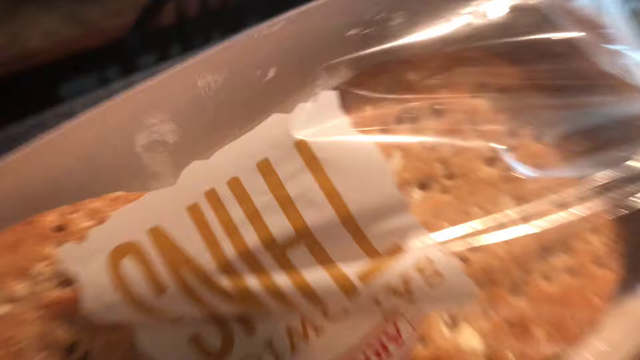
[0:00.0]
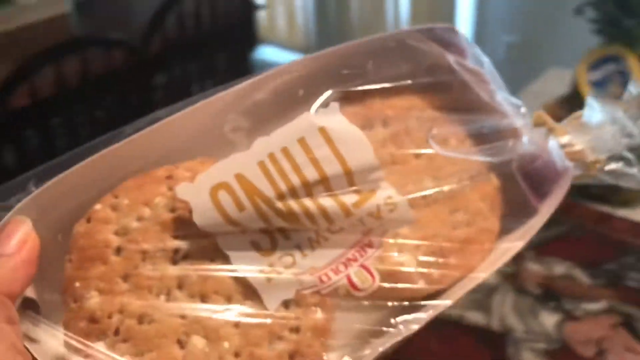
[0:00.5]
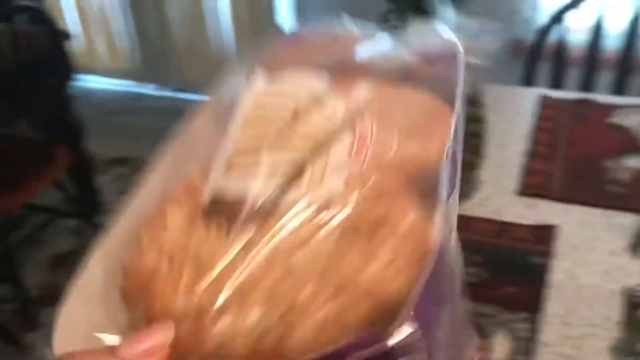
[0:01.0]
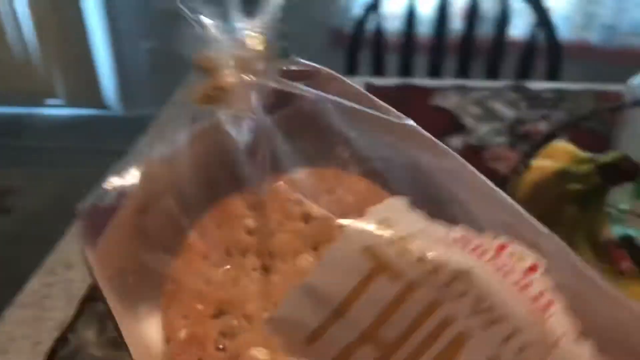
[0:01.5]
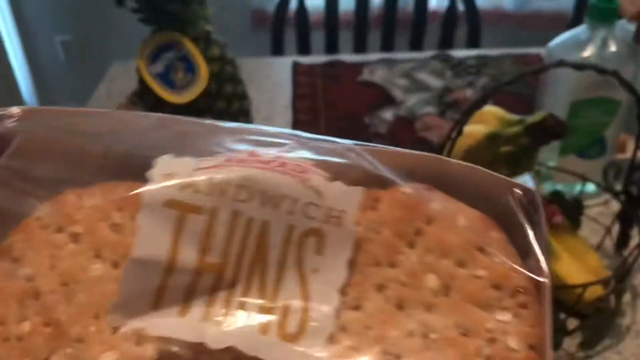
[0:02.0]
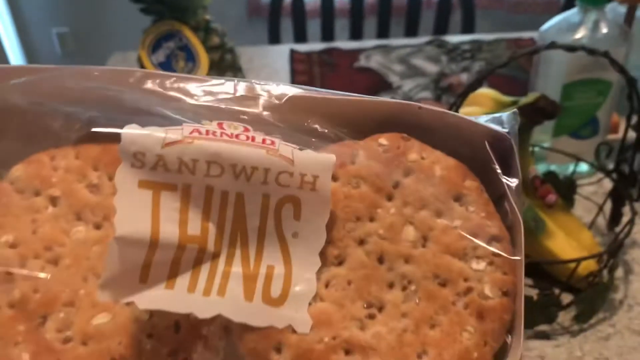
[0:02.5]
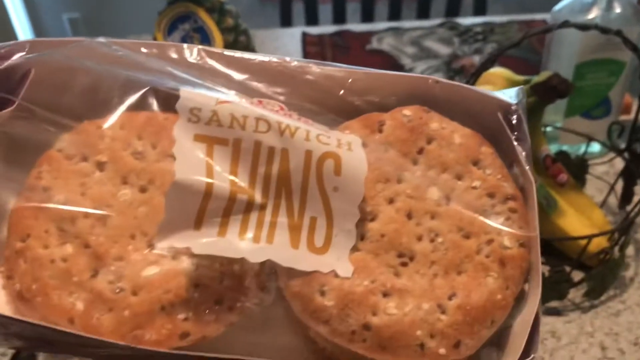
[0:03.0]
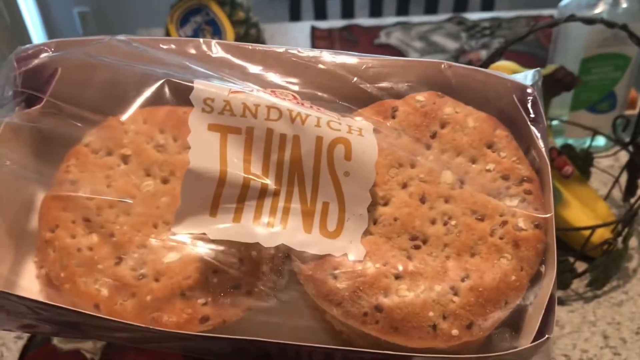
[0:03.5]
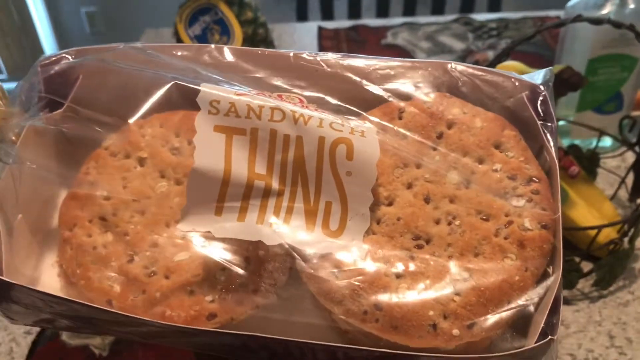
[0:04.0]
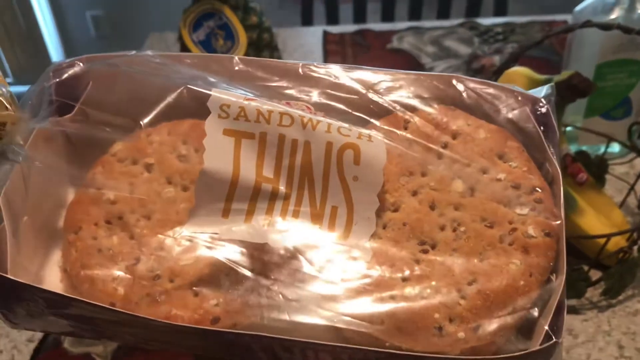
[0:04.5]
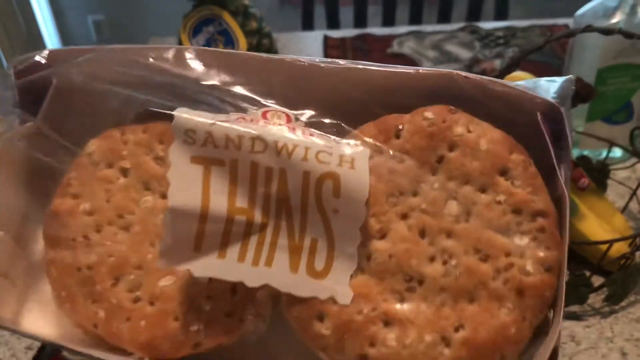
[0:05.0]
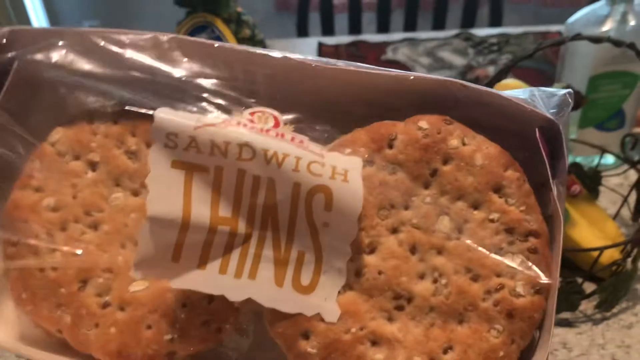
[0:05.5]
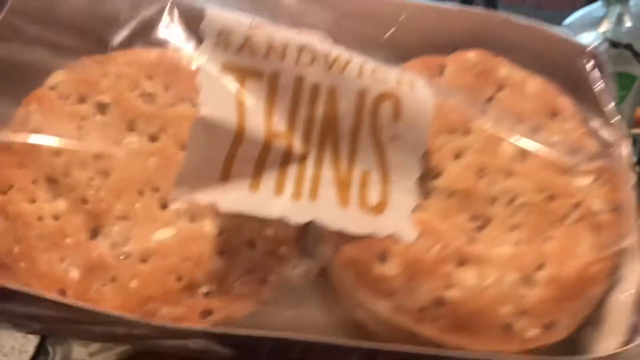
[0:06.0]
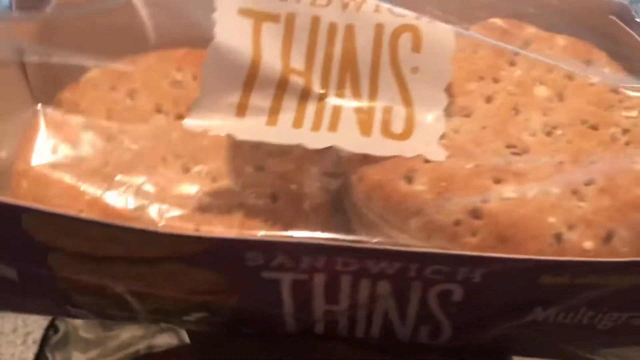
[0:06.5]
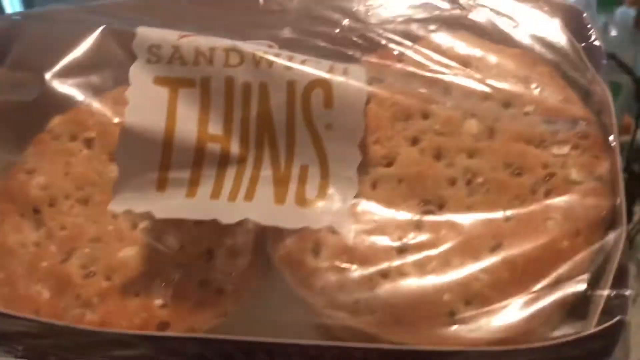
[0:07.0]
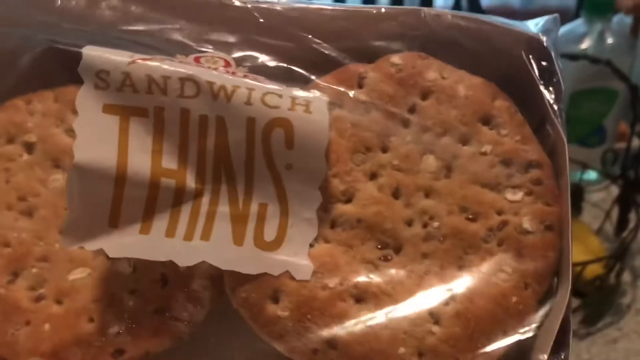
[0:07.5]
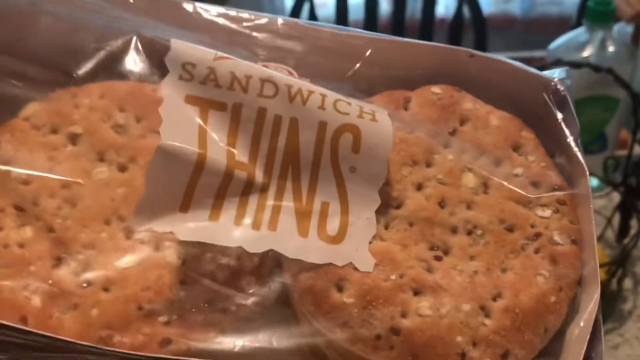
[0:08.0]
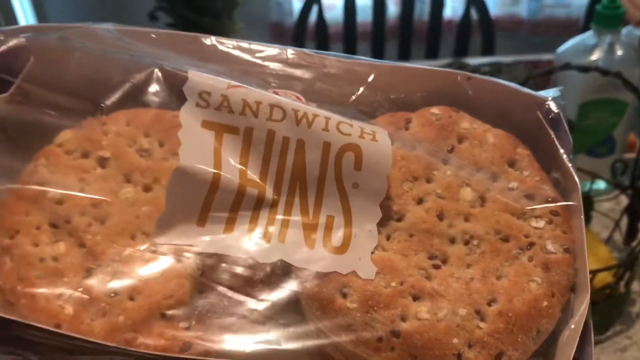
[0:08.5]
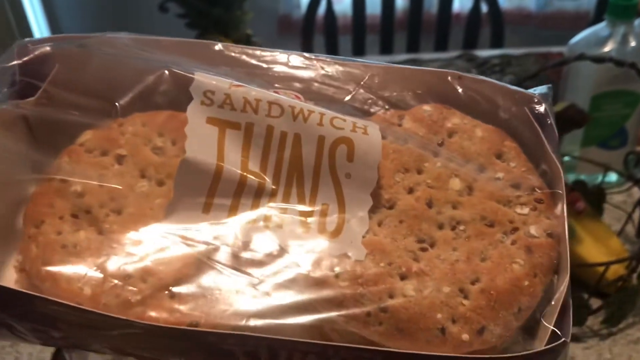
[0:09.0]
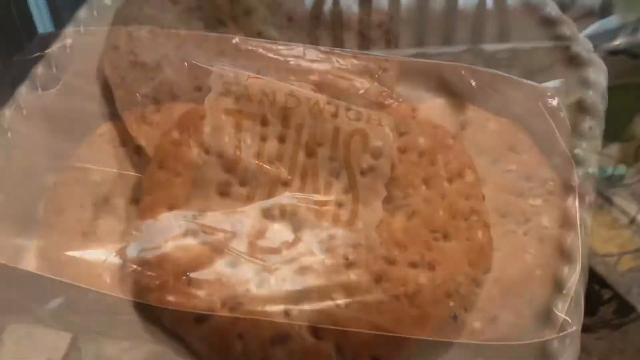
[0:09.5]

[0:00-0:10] The setting is someone's home, possibly their kitchen. A table holds fruits such as a banana and a pineapple. The focus of the shot is the person holding the camera, who has a bag of Arnold sandwich tins; they hold the bag and kind of adjust it, mostly keeping it in the camera's focus. The home is very well kept, with what look like dinner napkins by each chair lined up at the table. The camera focuses on the sandwich tins, and then there is a shot of two sandwich tins on a white plate.